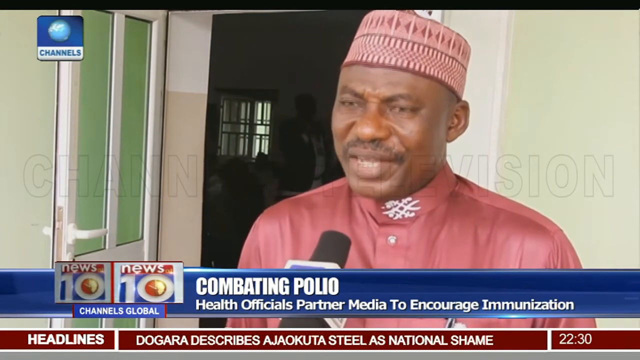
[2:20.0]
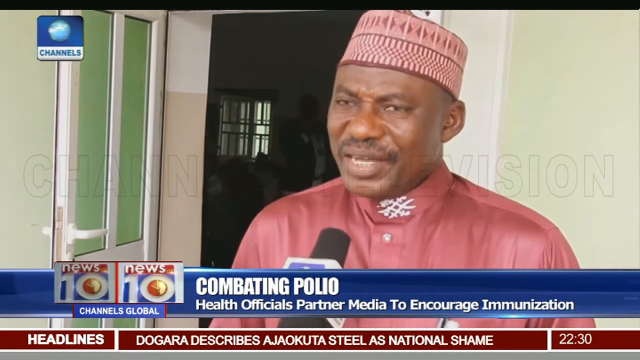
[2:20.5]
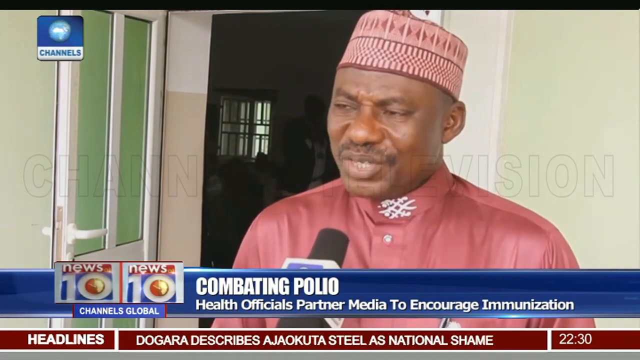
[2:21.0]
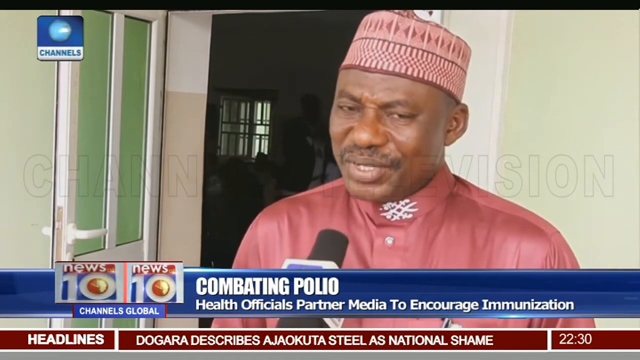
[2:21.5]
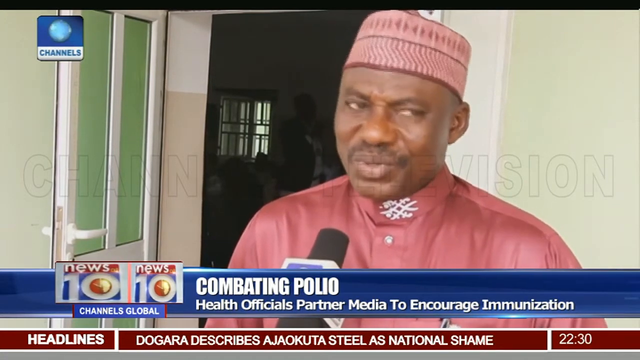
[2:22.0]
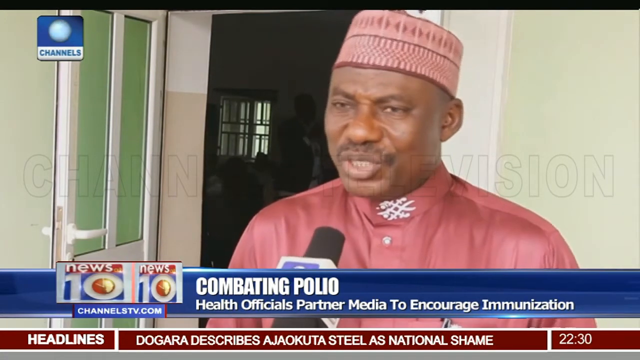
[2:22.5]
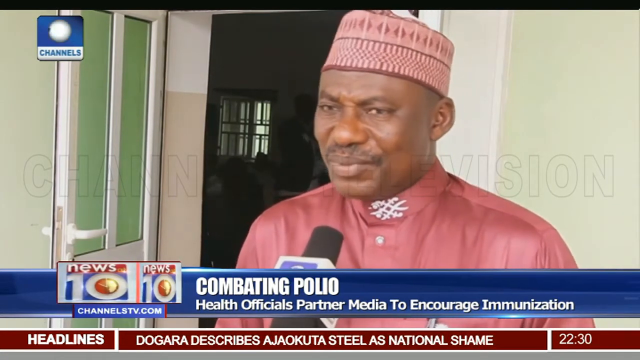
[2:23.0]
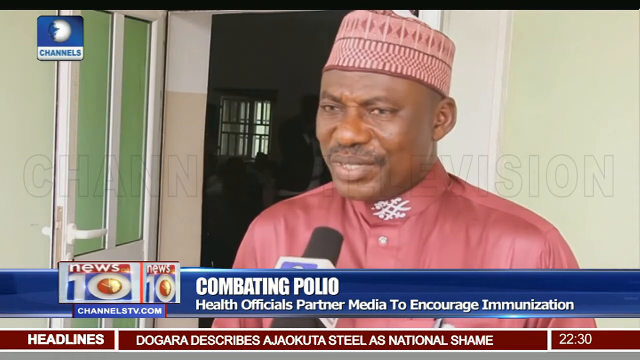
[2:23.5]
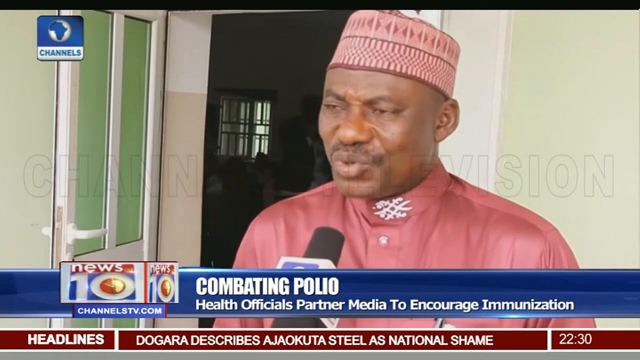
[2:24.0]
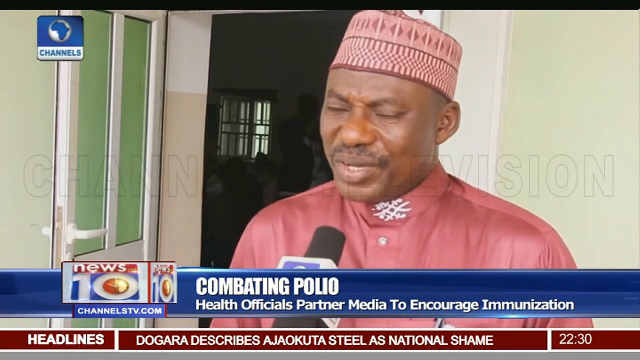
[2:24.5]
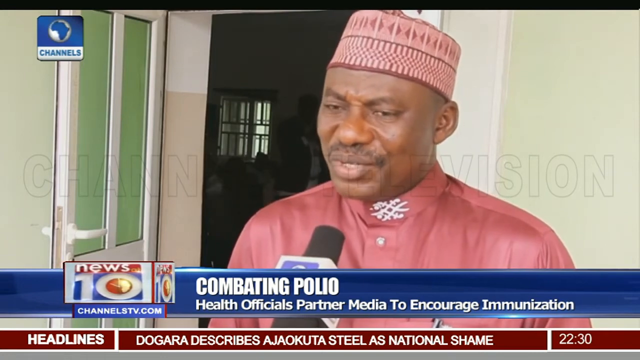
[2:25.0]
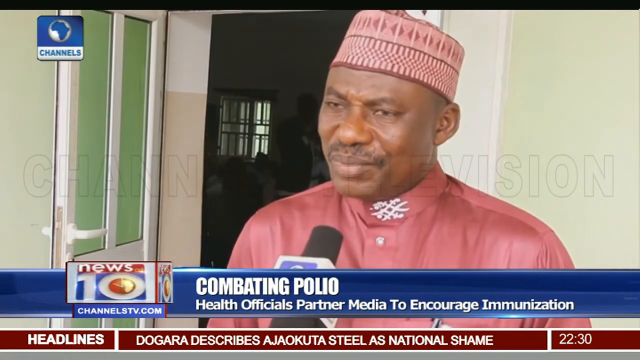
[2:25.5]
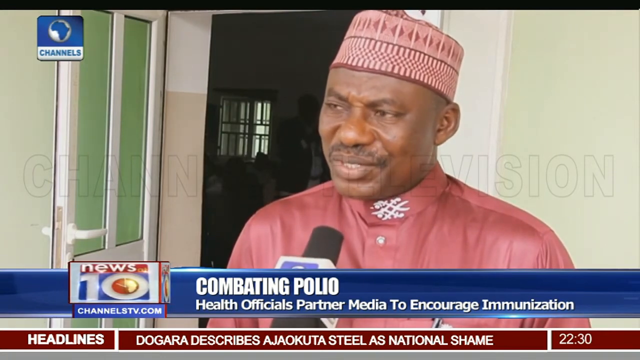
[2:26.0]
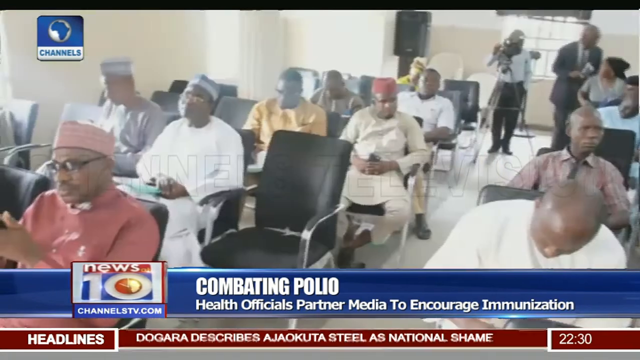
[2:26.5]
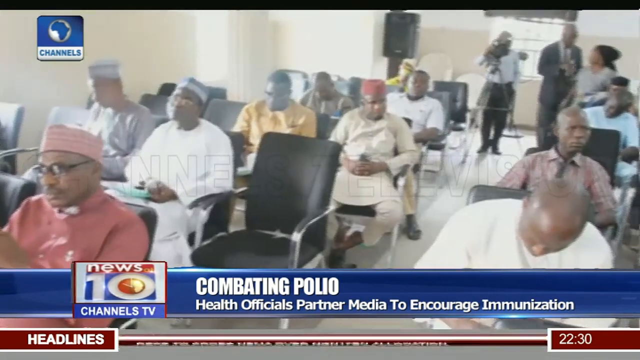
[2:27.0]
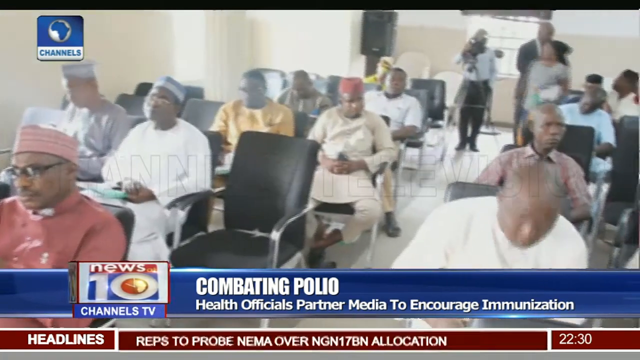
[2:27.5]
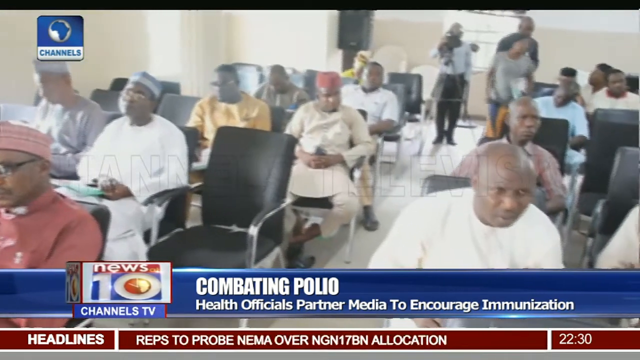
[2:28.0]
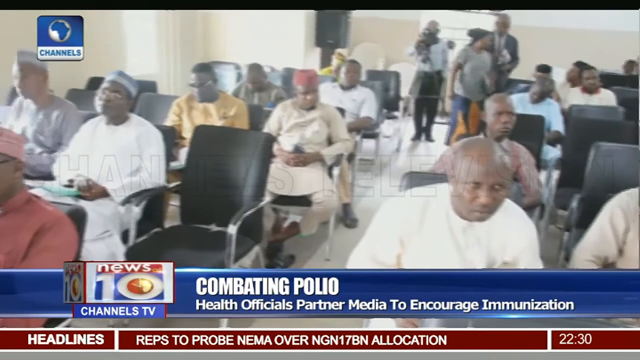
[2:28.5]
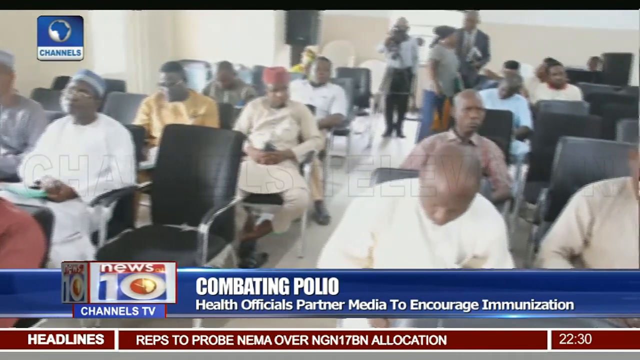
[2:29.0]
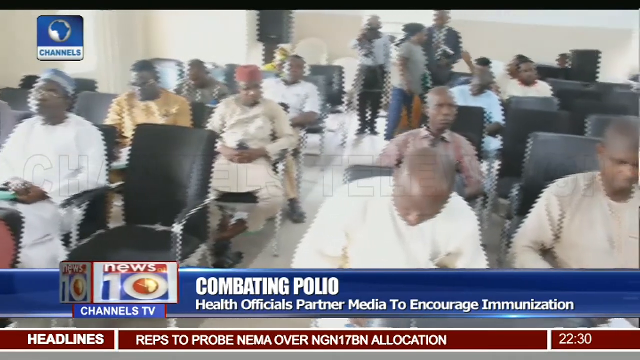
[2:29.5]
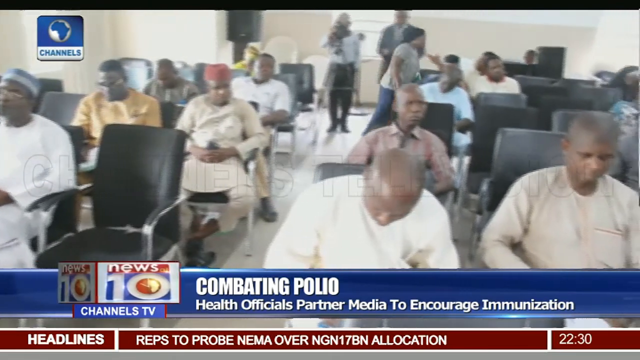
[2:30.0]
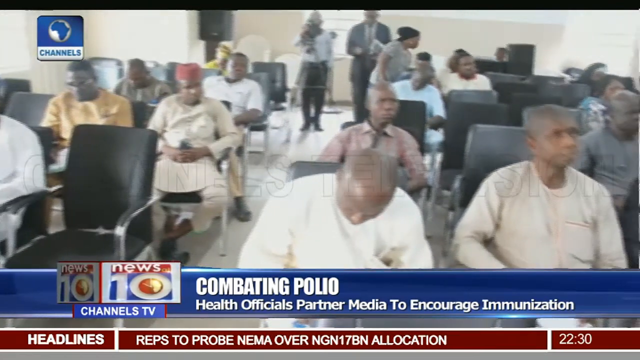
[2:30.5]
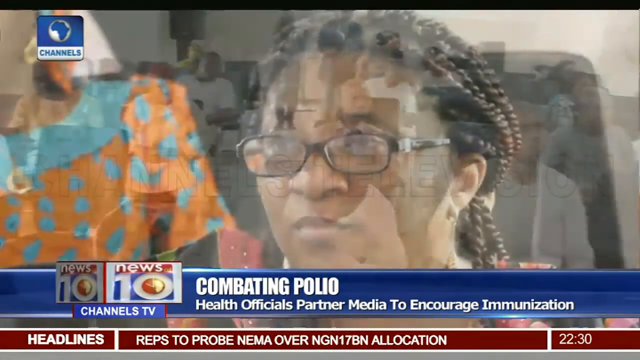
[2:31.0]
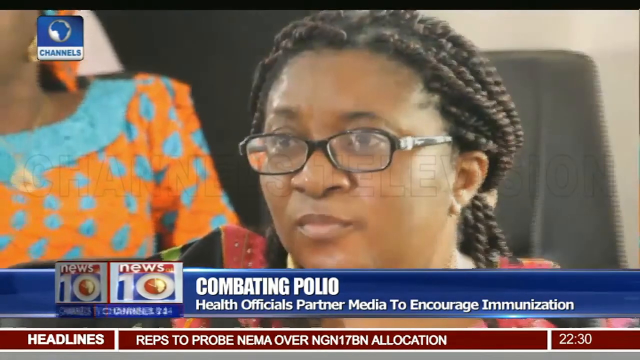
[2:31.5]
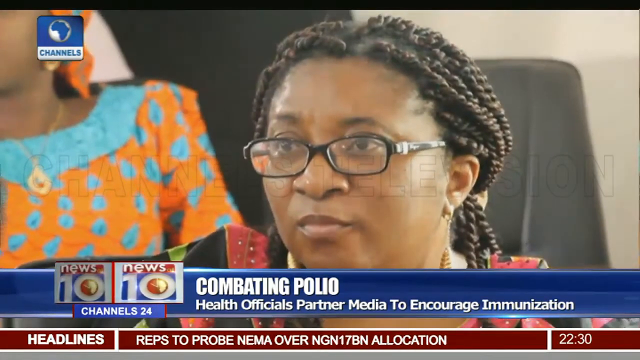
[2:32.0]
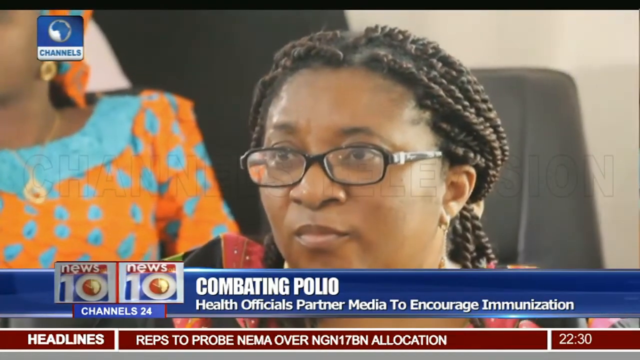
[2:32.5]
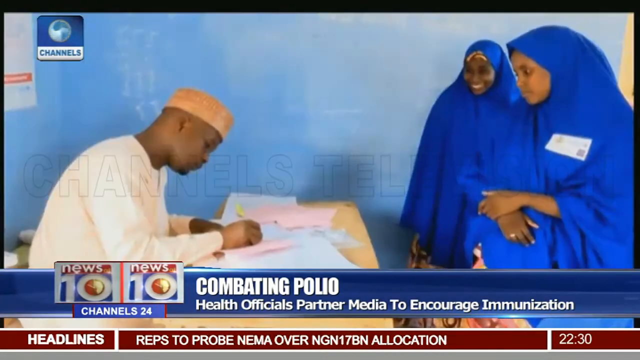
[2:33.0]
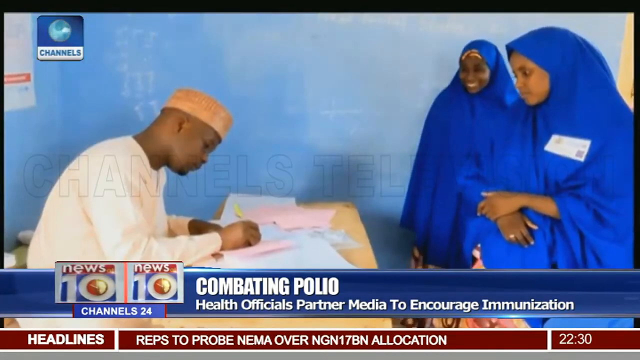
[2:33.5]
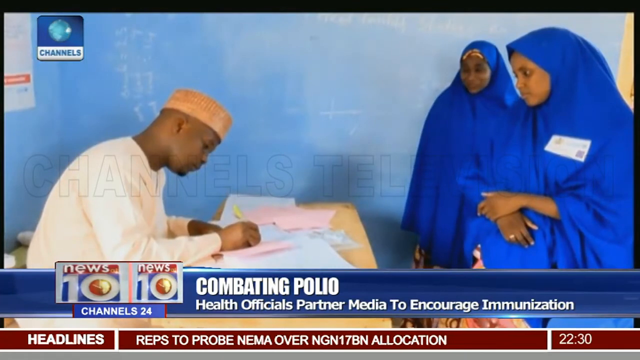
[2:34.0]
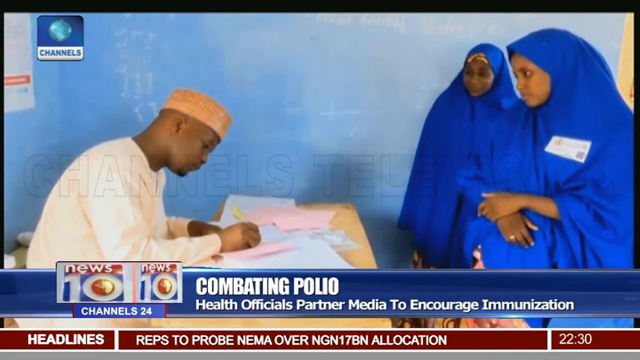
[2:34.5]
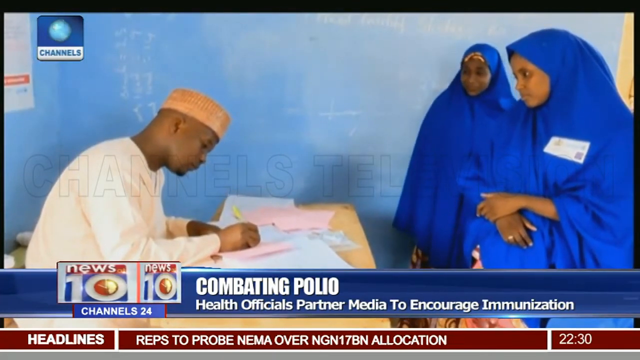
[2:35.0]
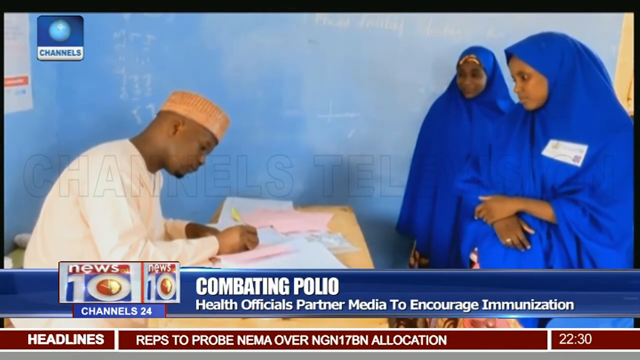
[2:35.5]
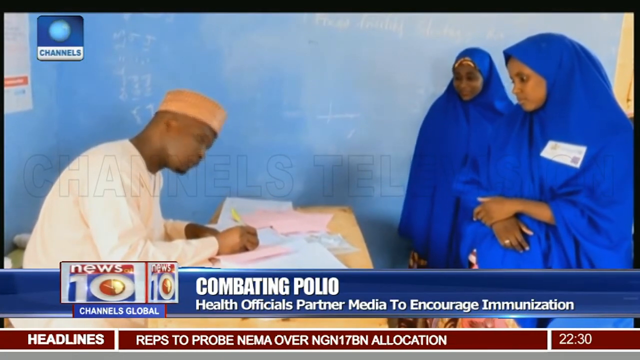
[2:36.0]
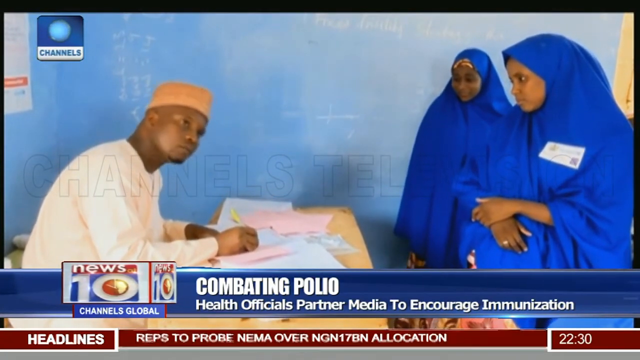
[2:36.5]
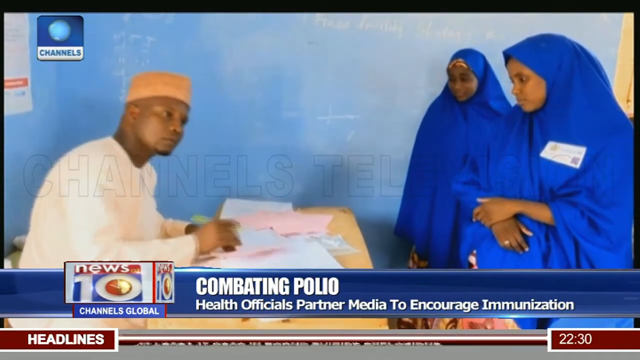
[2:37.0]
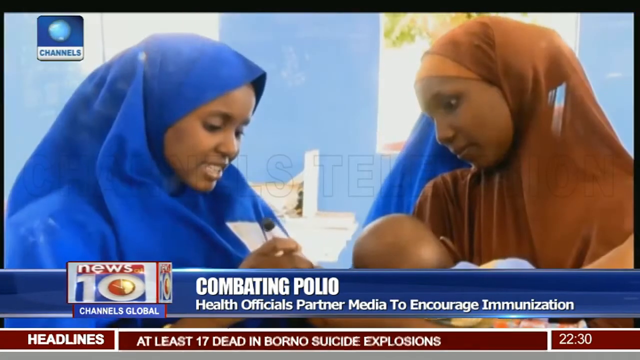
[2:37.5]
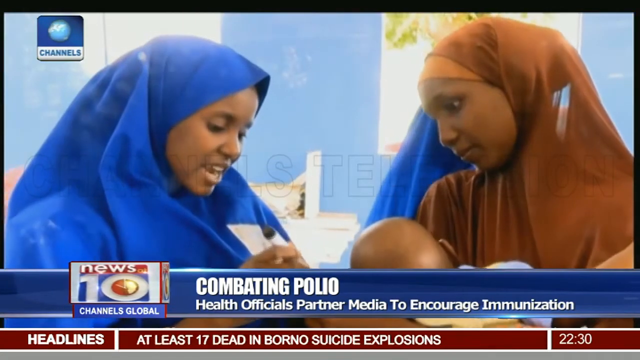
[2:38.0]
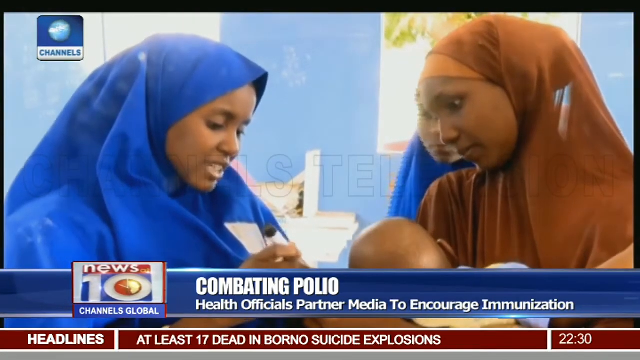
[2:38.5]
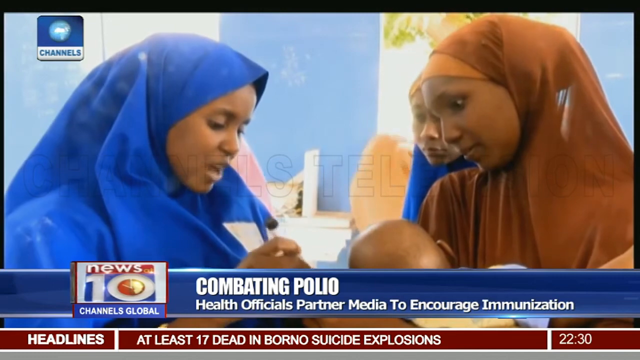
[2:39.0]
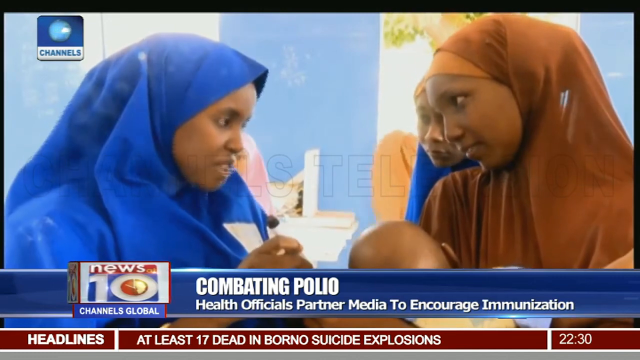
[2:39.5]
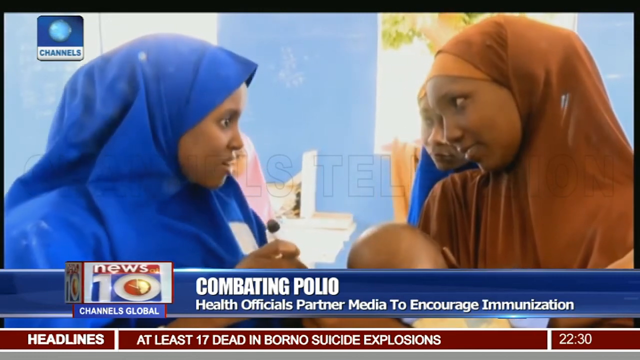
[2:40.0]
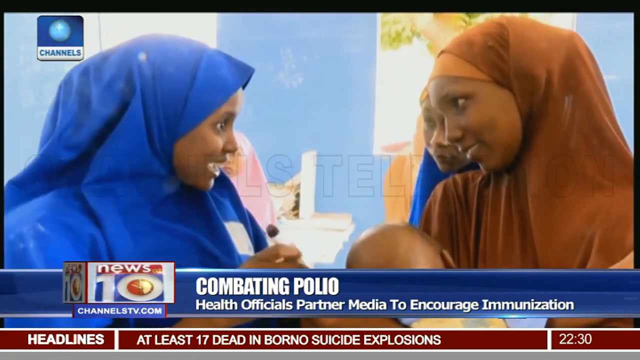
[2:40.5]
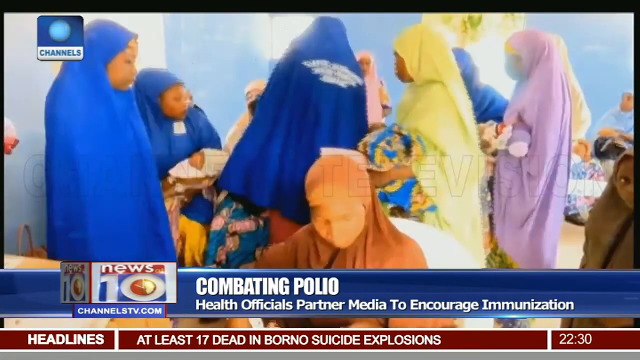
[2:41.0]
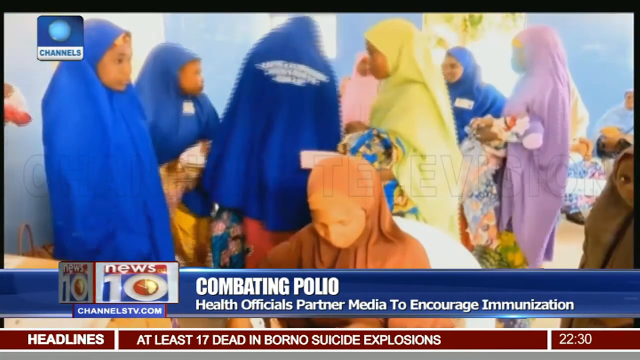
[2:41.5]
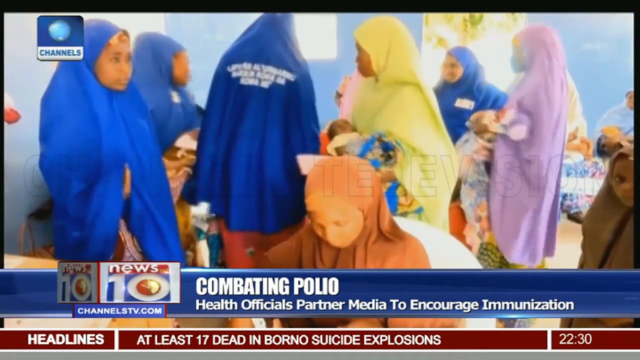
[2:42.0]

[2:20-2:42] The television man continues explaining what happened in the conference, and people in the conference are shown listening in the meeting. Nurses are then seen signing, and kids receive immunizations while mothers who have brought their children are spoken to. The report is from News 10.